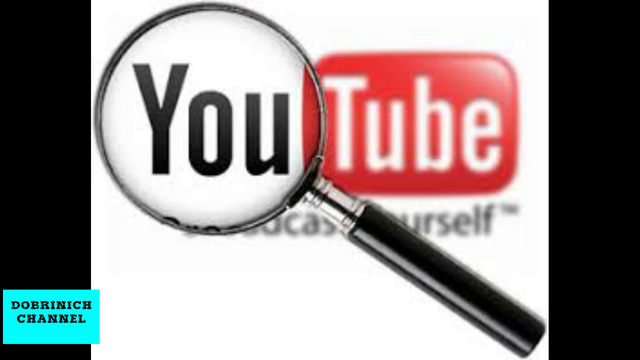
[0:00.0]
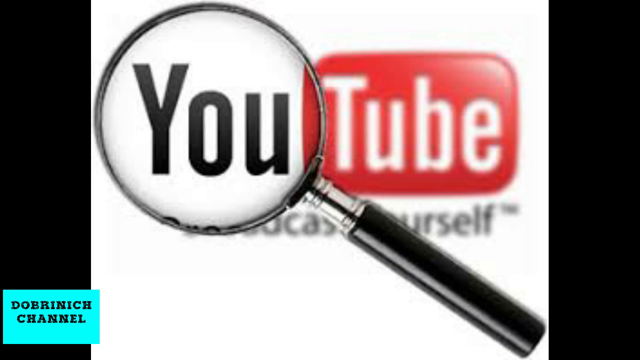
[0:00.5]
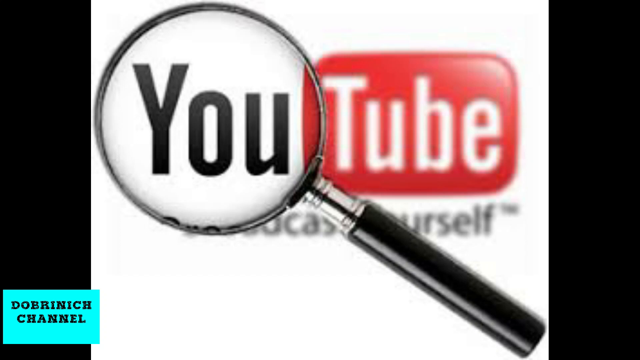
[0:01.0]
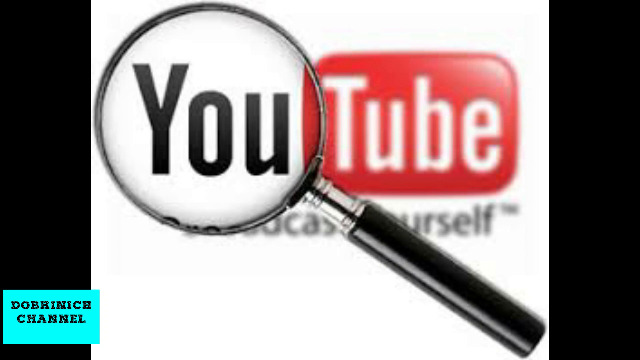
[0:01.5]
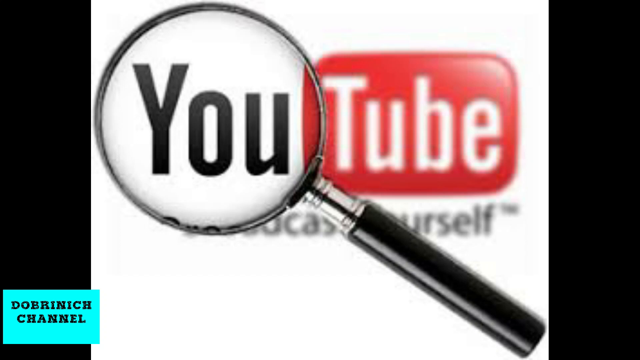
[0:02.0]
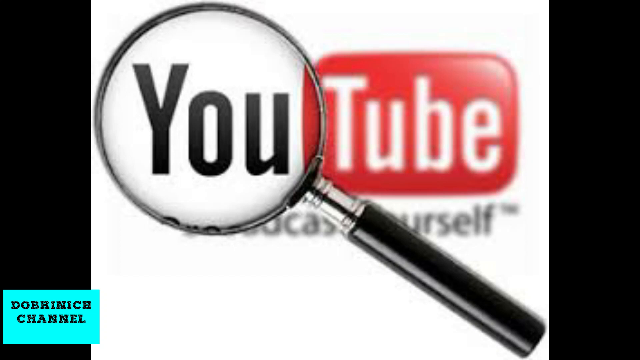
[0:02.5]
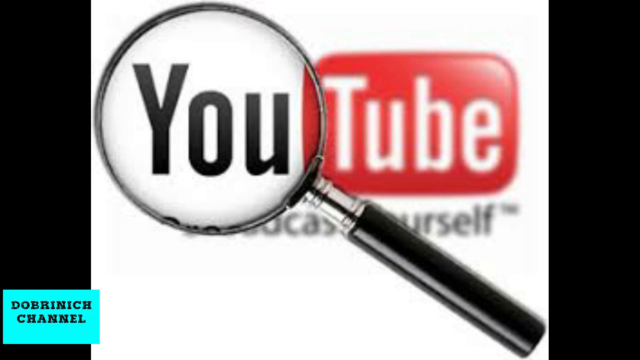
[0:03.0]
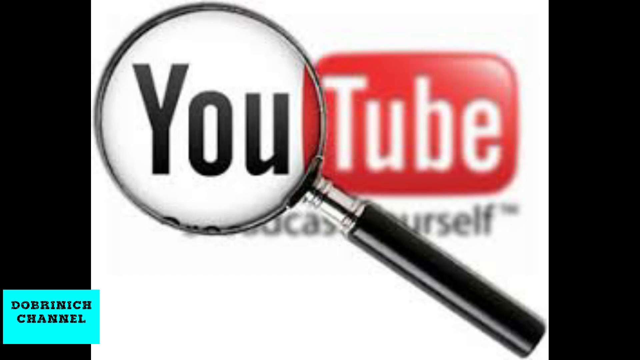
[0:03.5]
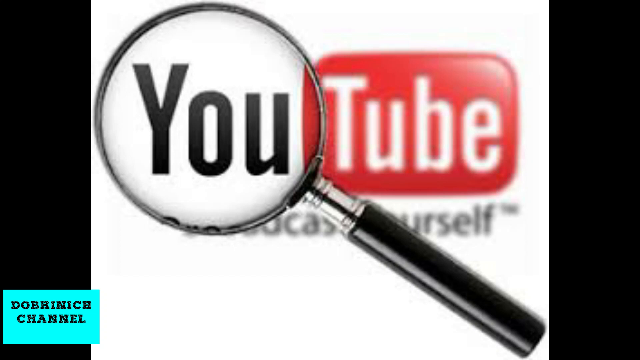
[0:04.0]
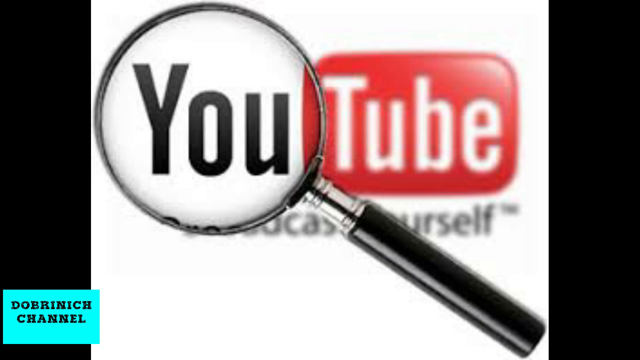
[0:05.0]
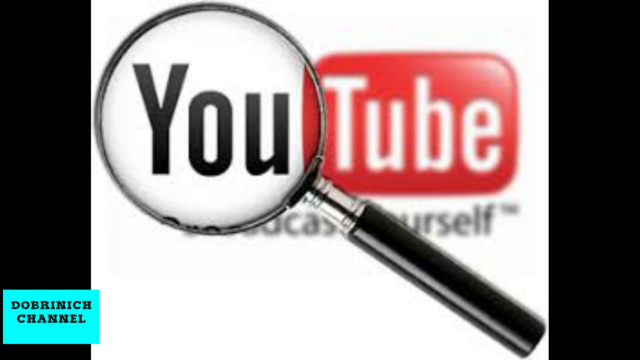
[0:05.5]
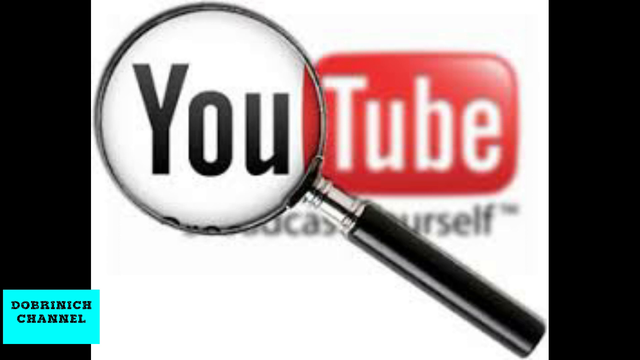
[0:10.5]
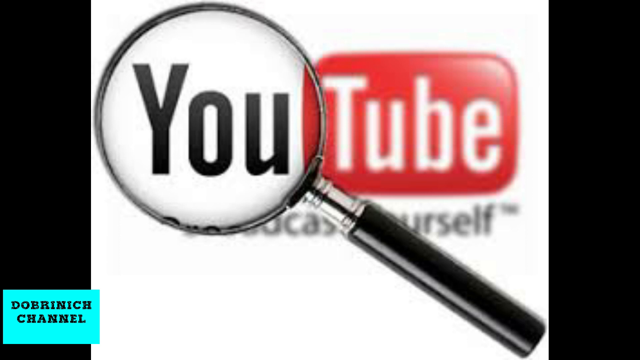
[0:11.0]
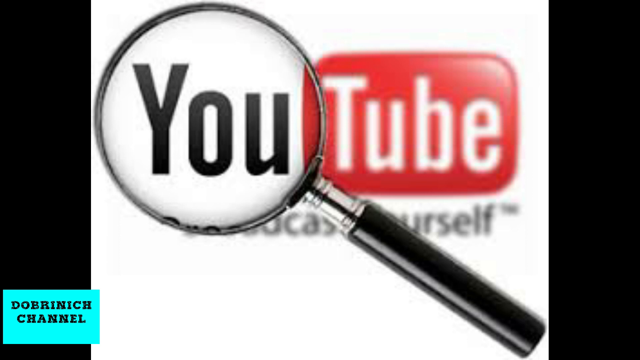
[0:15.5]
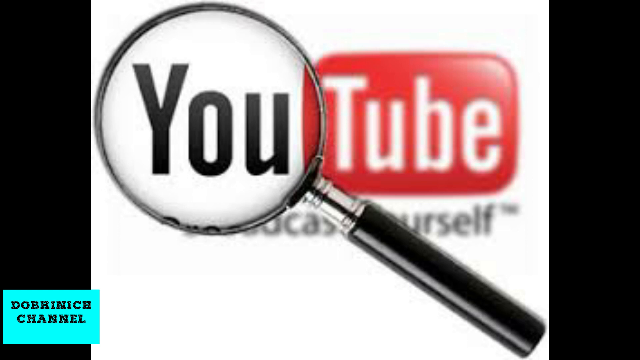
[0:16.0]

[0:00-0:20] The video opens with the YouTube logo in the background: the "You" in black and the "Tube" in white on a red background. A black magnifying glass is over the screen, magnifying the "U", which makes the "Tube" look slightly blurred in the background. The magnifying glass is on an angle, with the handle at the bottom right of the screen and the glass part at the top left. It highlights the "U" and goes slightly over the red, so a tiny section of the red background behind "Tube" is within the glass. Below, where the logo usually says "broadcast yourself", the "broad" and the "yo" of "yourself" are cut off by the magnifying glass, so only the remaining letters are visible. There are black borders along the sides. In the bottom left-hand corner, on a bright blue background, black text reads "Dobraninich Channel"; this blue box is mostly over the left black border, with a slight section over the white background where the YouTube logo is.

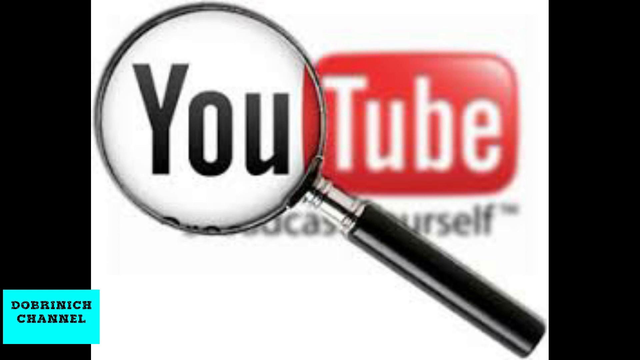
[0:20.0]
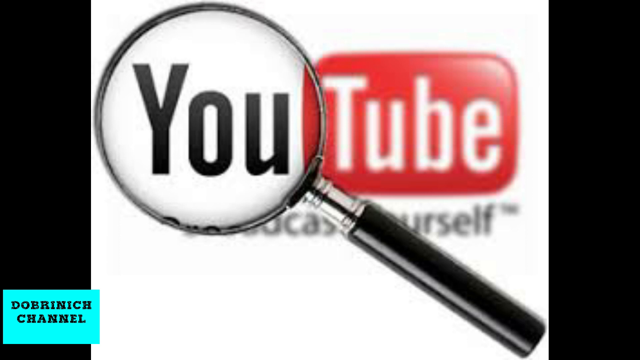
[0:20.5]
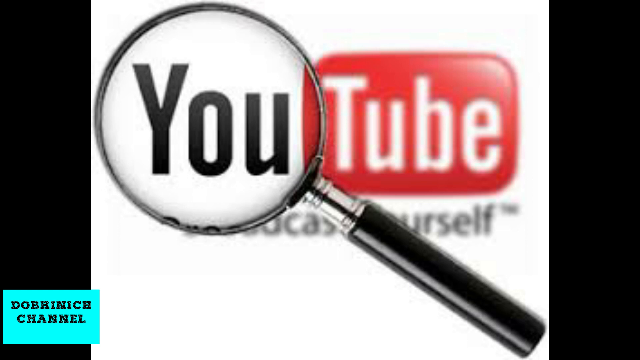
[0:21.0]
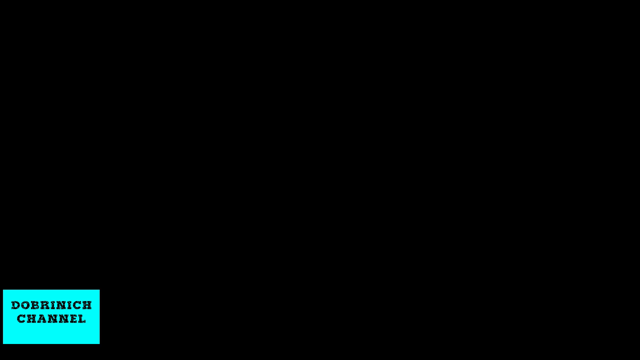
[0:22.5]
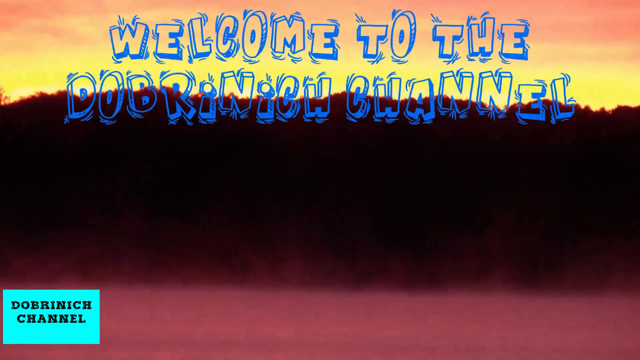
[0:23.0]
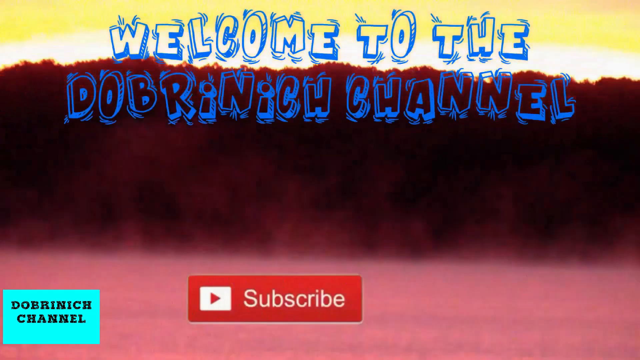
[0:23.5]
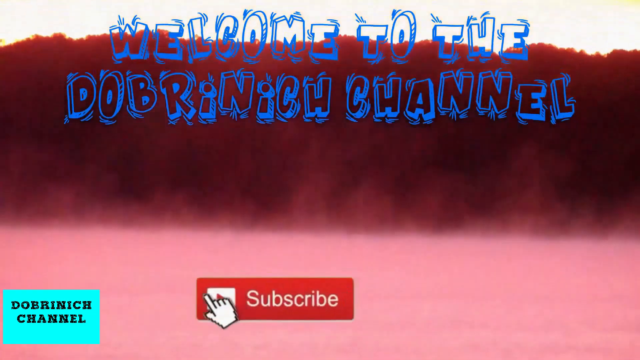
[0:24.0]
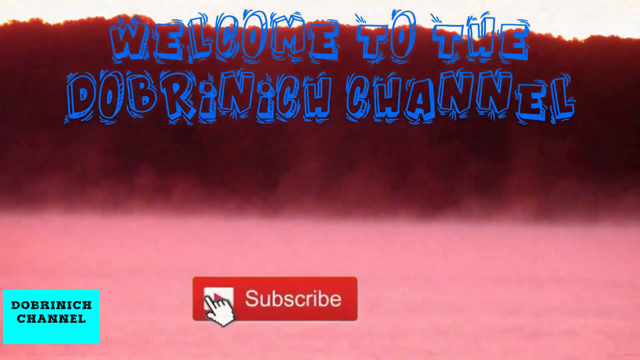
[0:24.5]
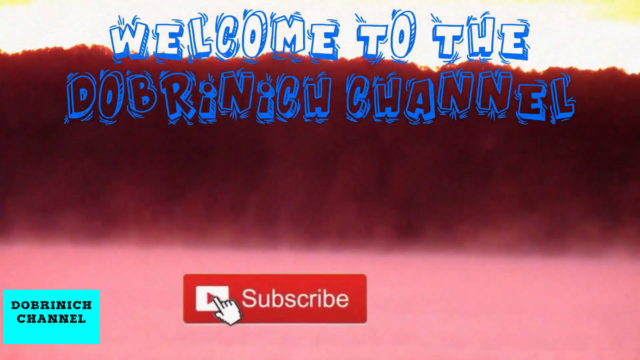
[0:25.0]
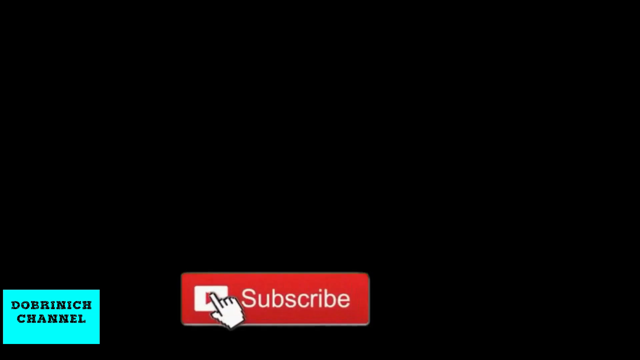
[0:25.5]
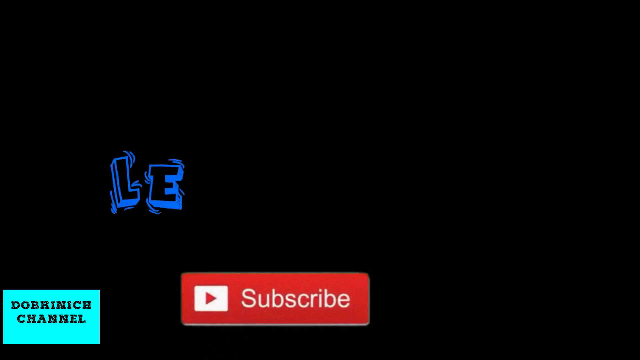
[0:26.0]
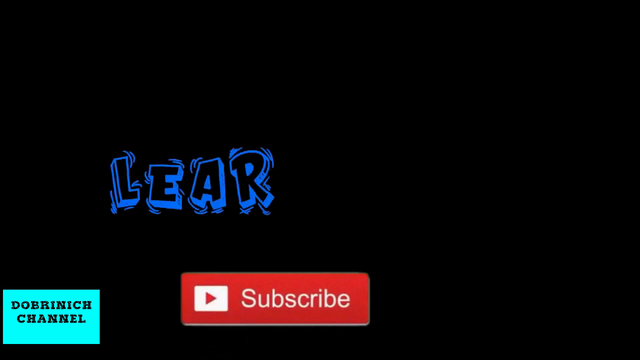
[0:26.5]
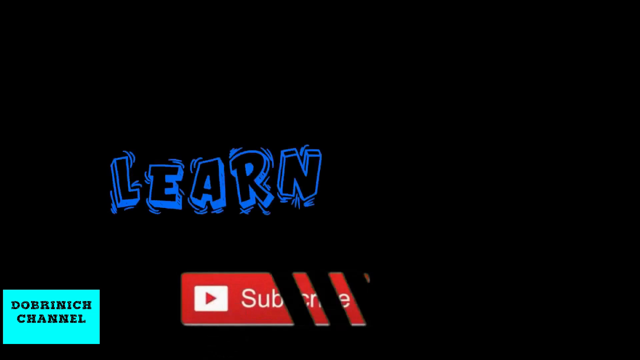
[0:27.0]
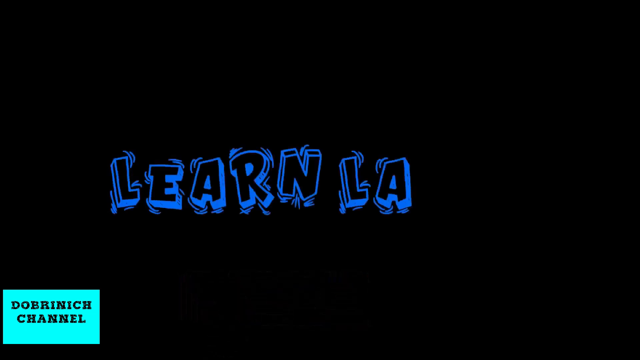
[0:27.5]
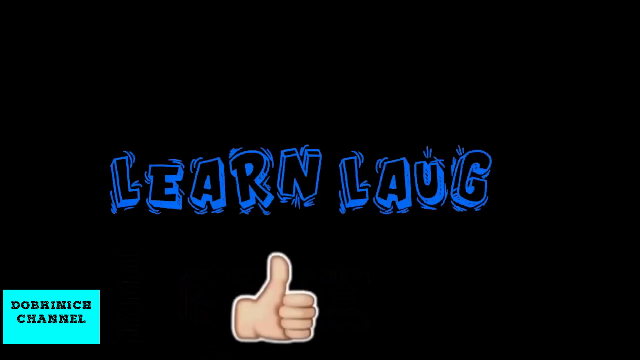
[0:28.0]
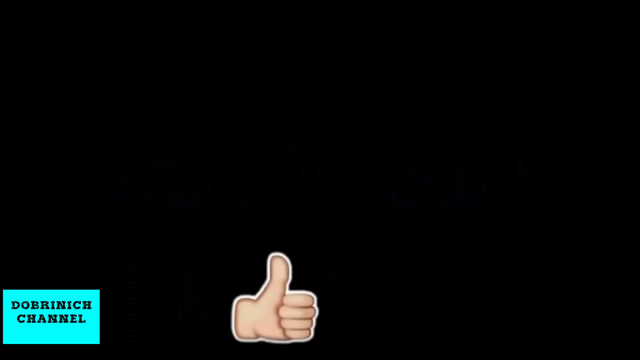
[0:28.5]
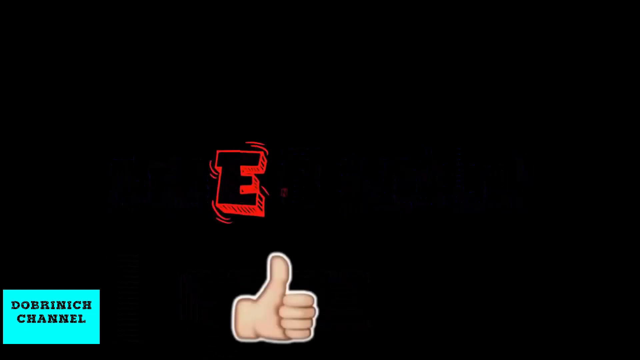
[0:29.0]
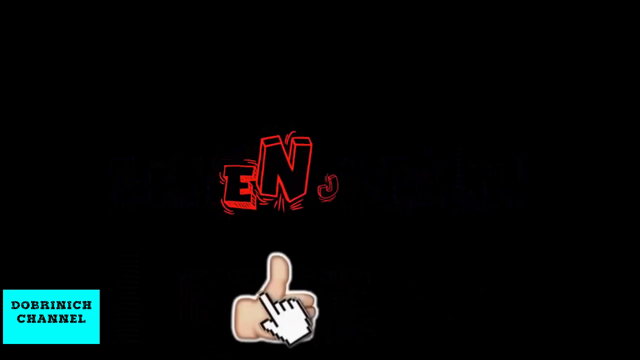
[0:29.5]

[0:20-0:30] The scene changes to a dark screen with a pale pink section at the bottom, going into dark purple and then bright yellow and white at the top, and the purple section in the middle fills more of the screen. At the top, blue text reads "welcome to the Dobroninch channel". A subscribe button is at the bottom left with a cursor, and the person clicks subscribe. In the same blue font, the text then reads "learn, laugh". A thumbs-up emoji is at the bottom, which the person clicks, after which more text comes up on the screen.